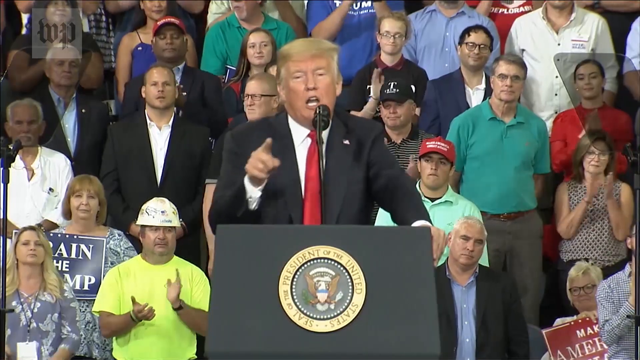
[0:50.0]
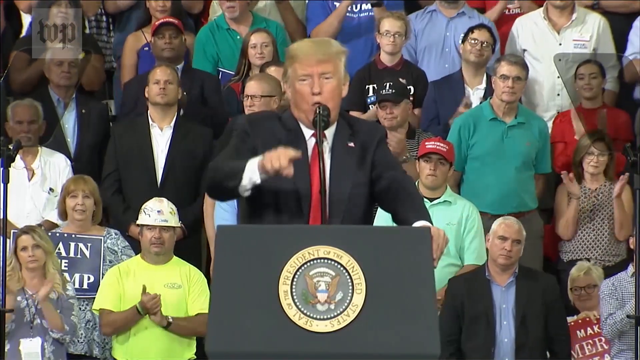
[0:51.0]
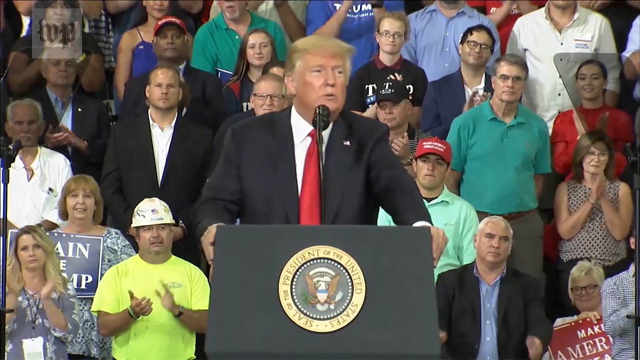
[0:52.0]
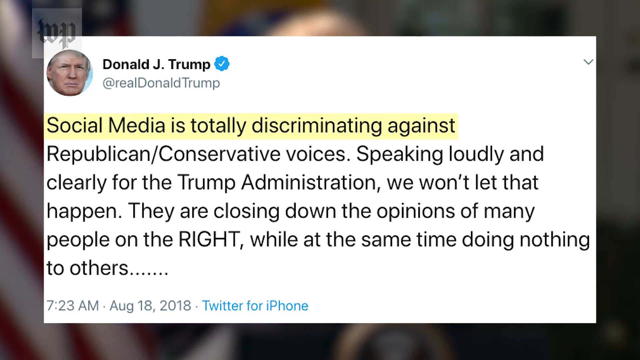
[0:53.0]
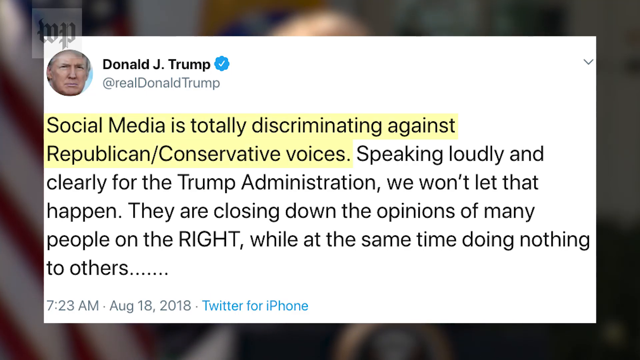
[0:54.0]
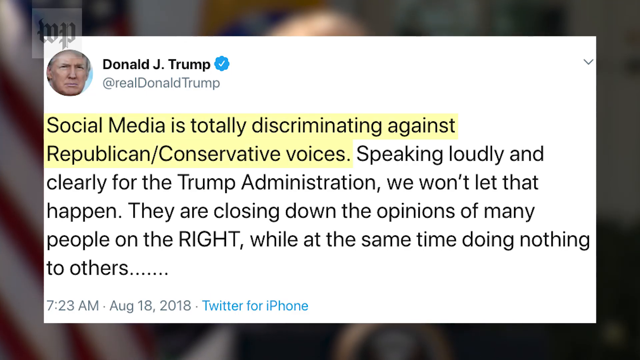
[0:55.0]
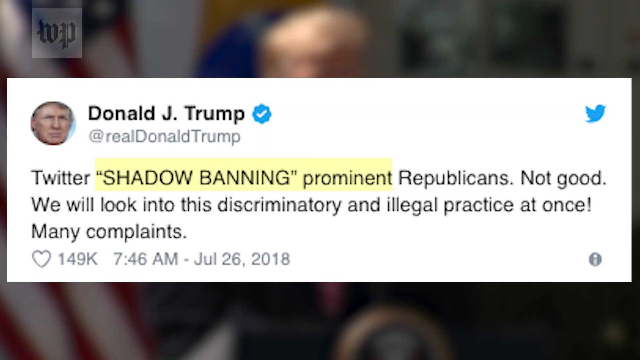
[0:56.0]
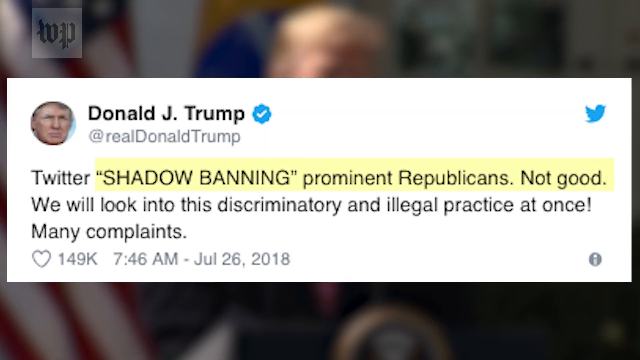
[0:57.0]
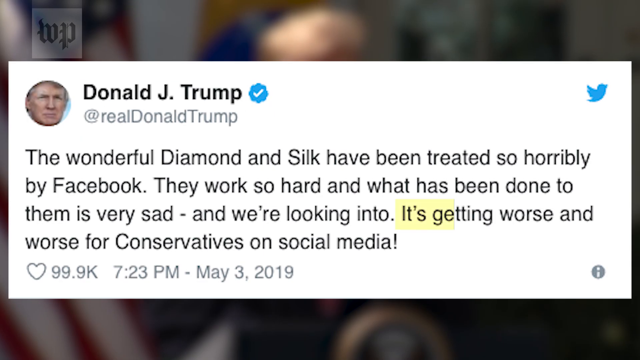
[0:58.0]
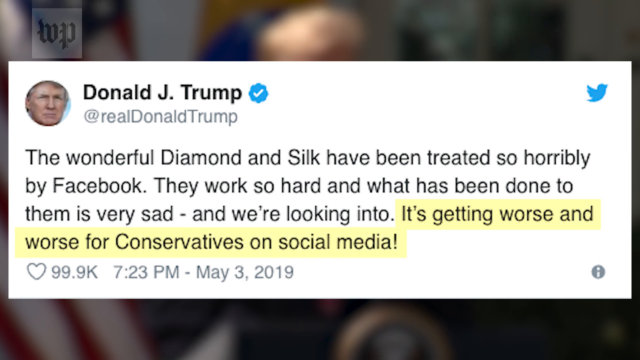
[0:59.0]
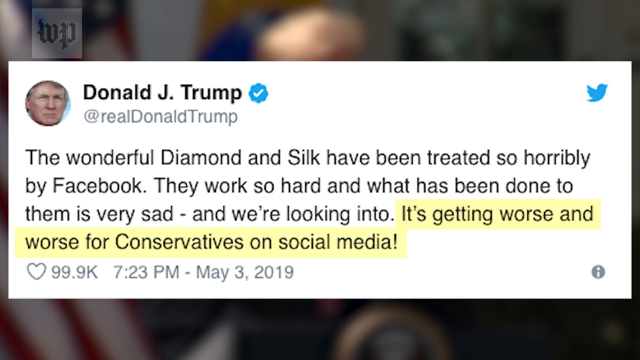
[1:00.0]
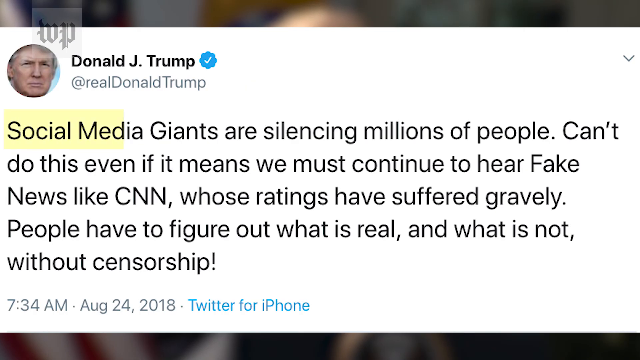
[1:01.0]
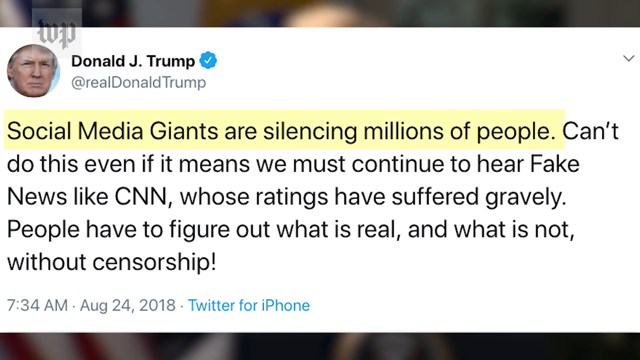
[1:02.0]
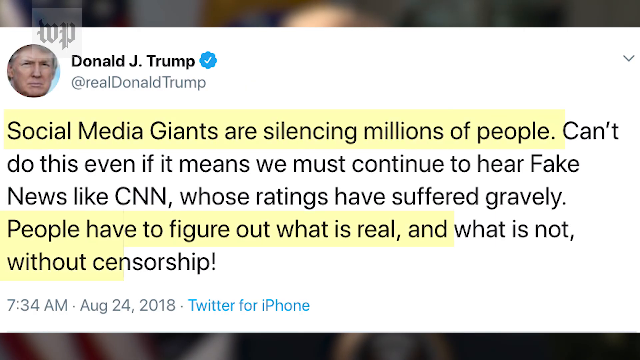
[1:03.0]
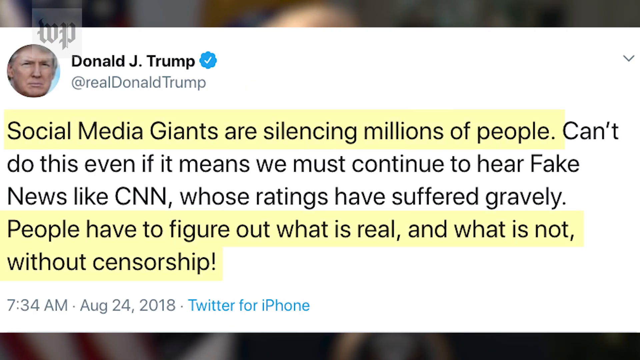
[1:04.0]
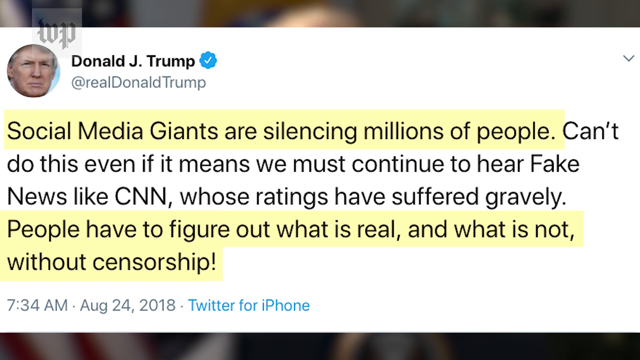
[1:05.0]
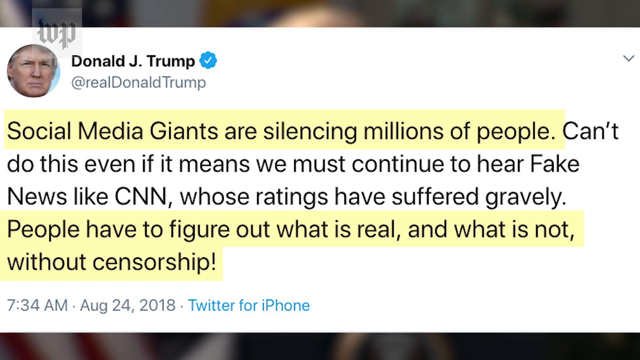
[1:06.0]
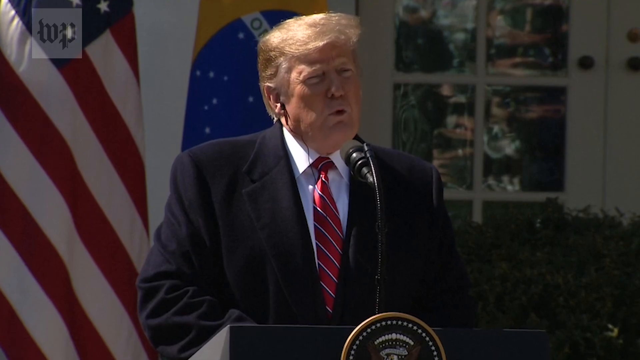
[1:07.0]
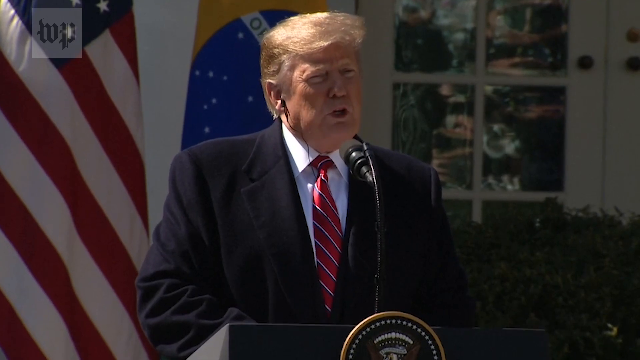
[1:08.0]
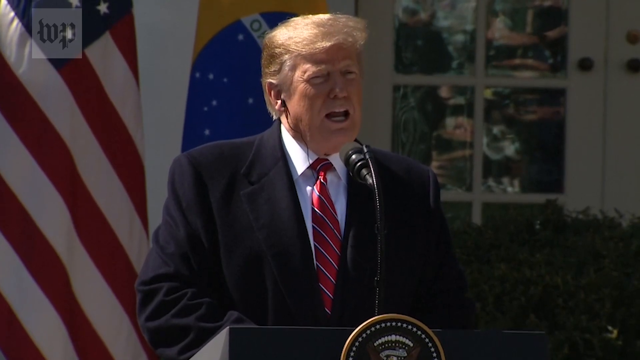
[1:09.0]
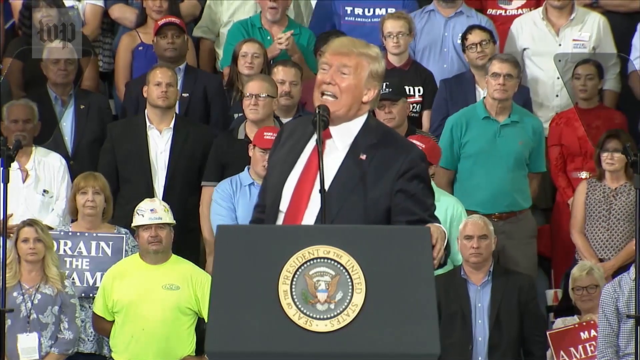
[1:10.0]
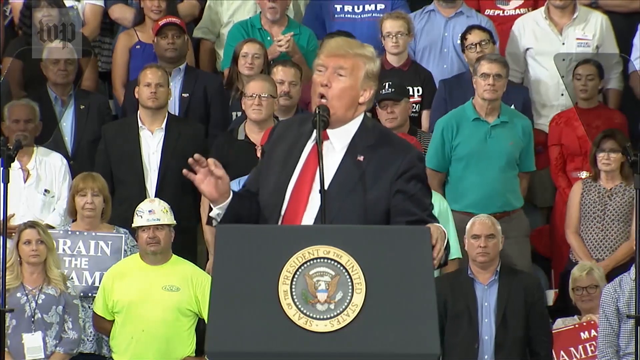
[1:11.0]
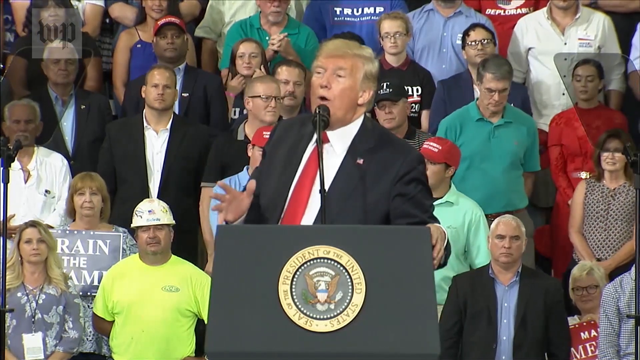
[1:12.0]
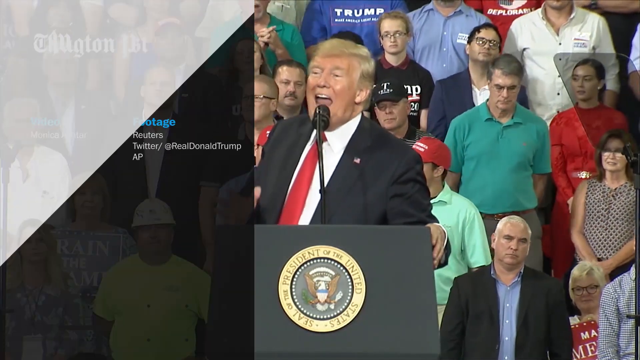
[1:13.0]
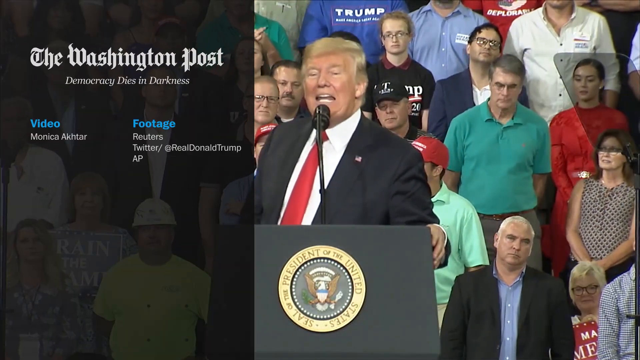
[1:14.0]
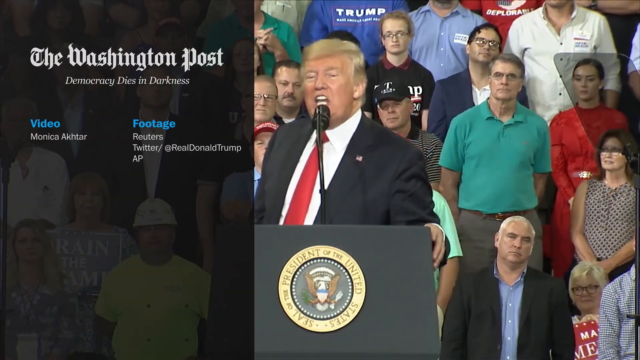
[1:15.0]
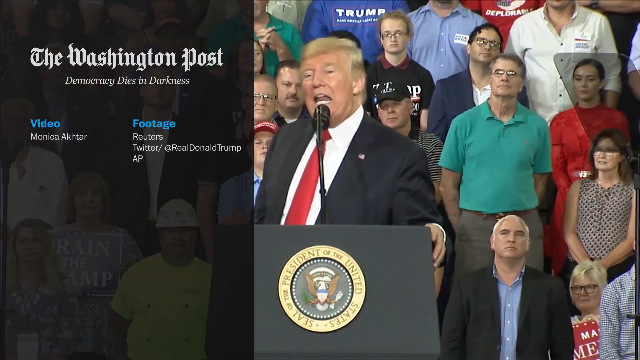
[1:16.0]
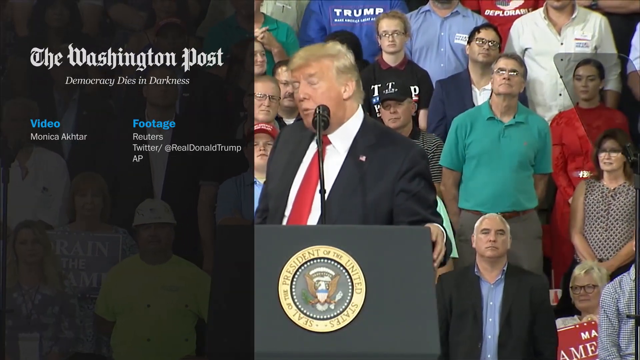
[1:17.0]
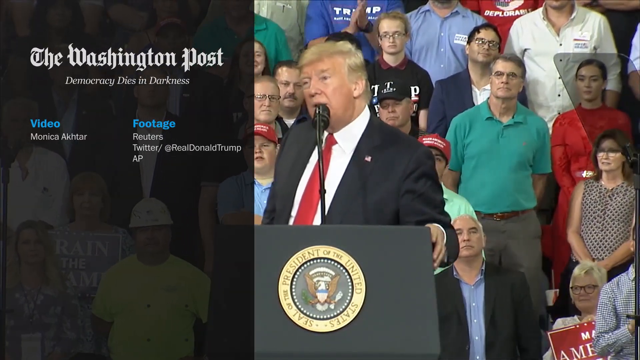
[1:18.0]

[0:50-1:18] A screenshot of a tweet from President Donald Trump appears, reading "social media is totally discriminating against Republican/conservative voices" and "speaking loudly and clearly for the Trump administration", followed by "They are closing down the opinions of many people". Another screenshot reads "the wonderful Diamond and Silk have been treated so horribly by Facebook. They work so hard and what has been done to them is very sad", with the date "May 3rd, 2019". Text then reads "Social media giants are silencing millions of people."